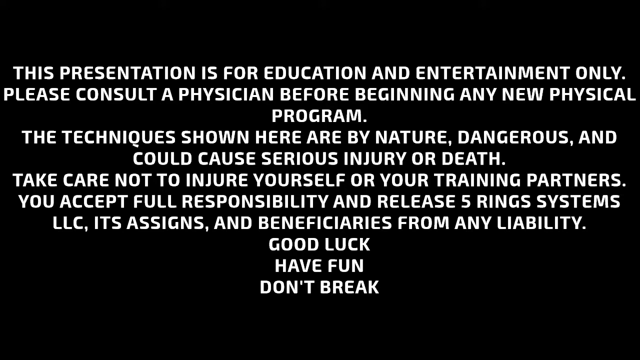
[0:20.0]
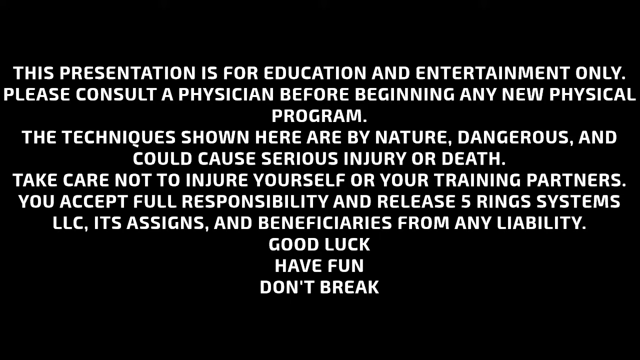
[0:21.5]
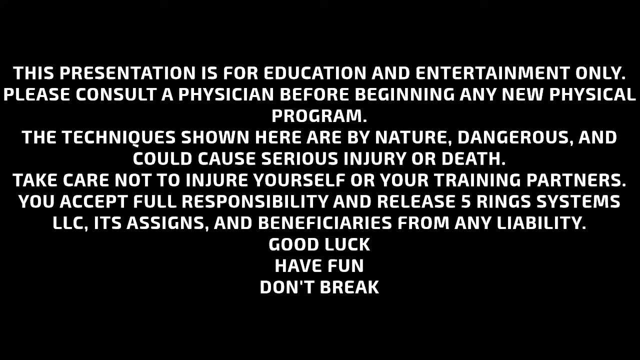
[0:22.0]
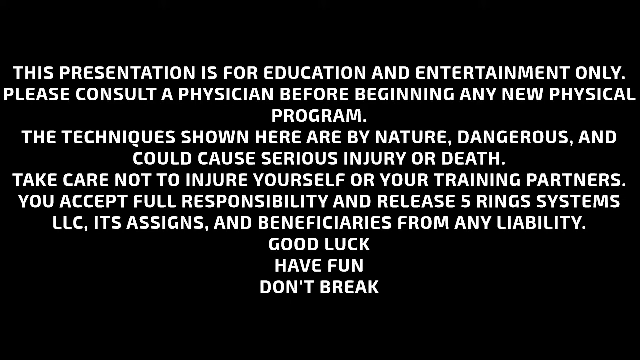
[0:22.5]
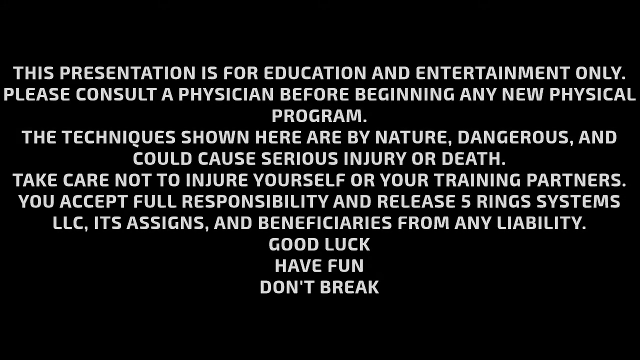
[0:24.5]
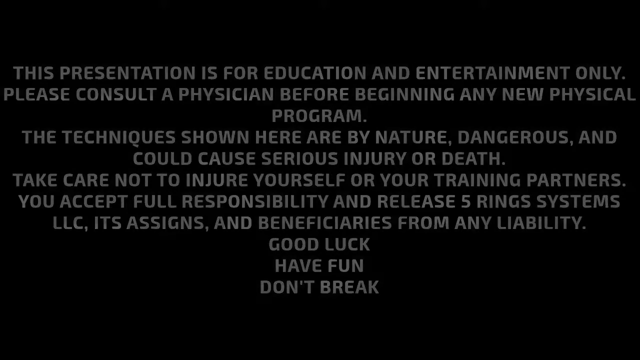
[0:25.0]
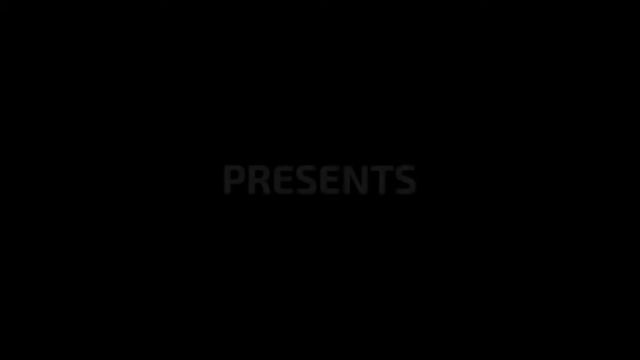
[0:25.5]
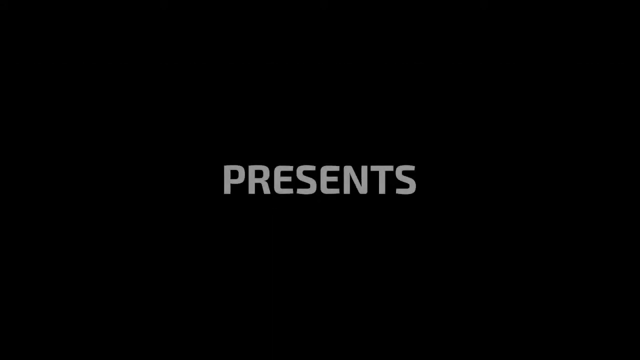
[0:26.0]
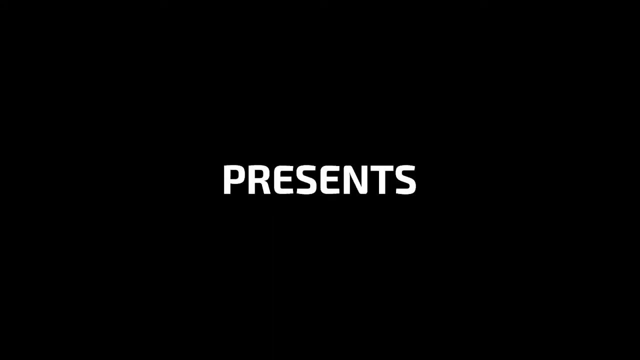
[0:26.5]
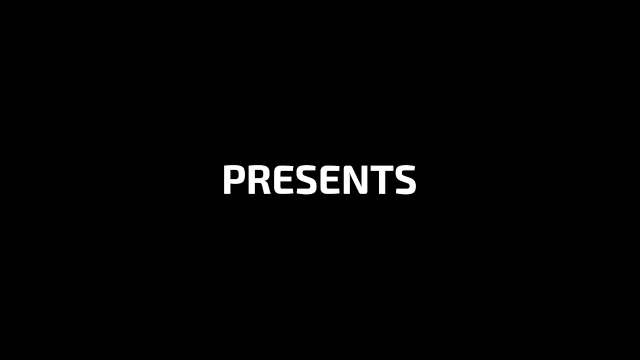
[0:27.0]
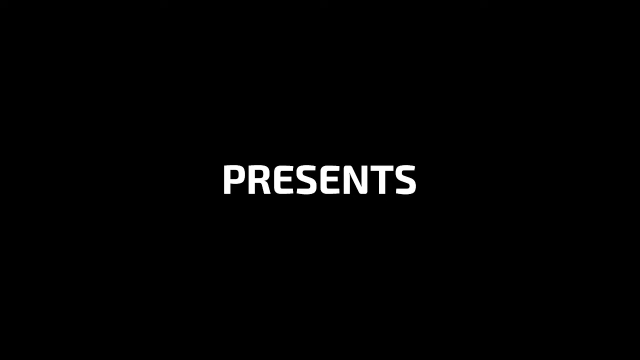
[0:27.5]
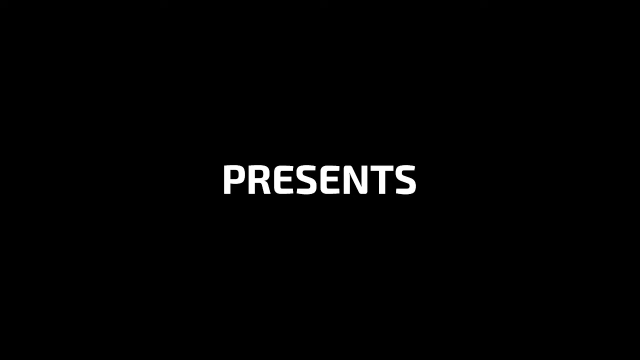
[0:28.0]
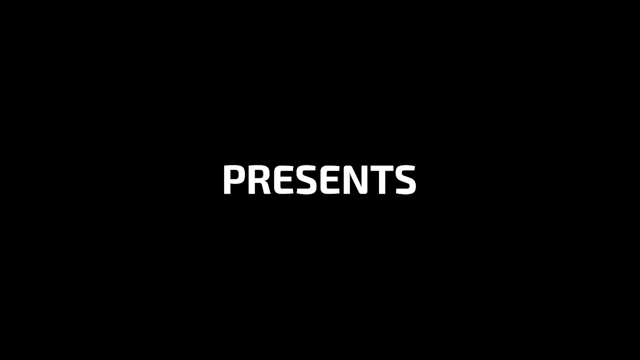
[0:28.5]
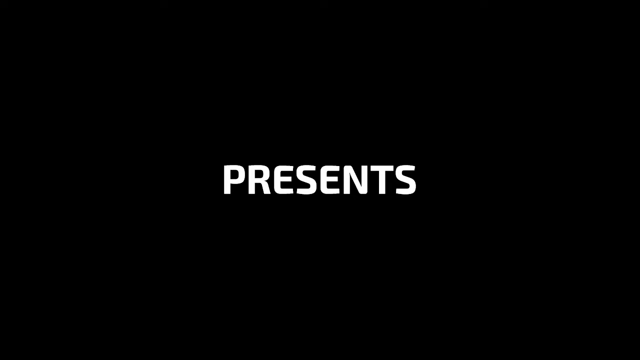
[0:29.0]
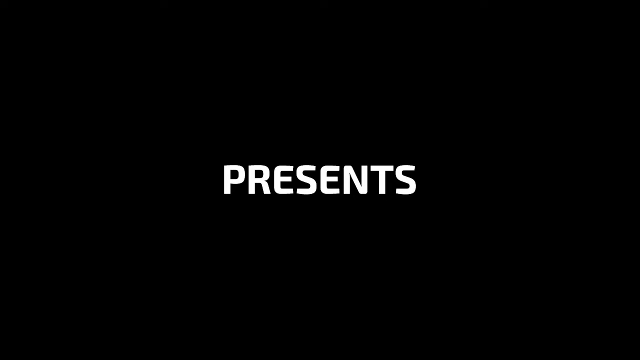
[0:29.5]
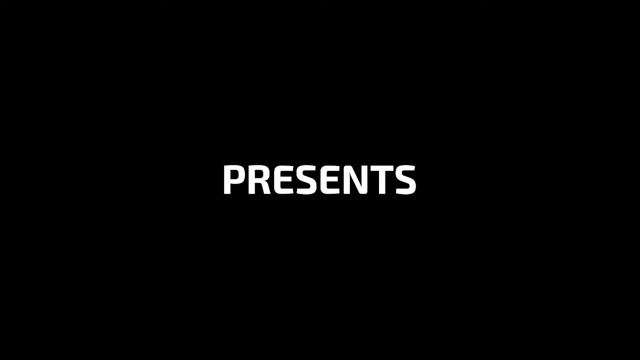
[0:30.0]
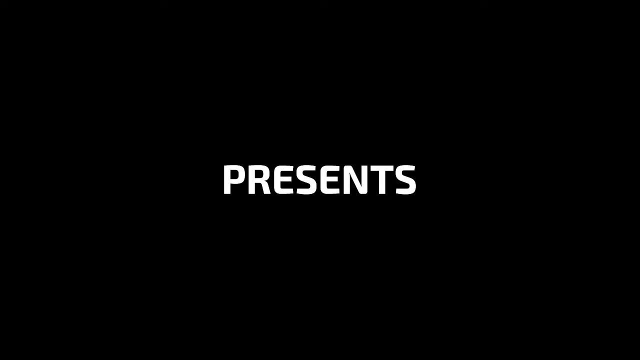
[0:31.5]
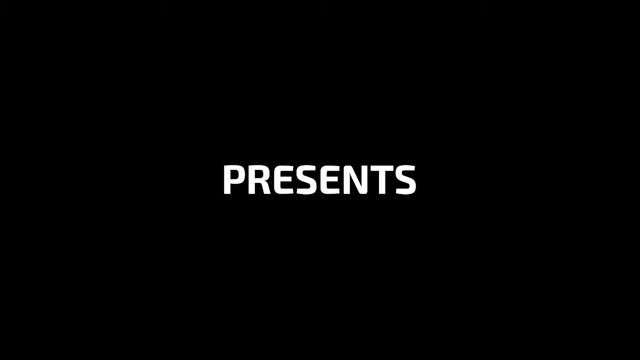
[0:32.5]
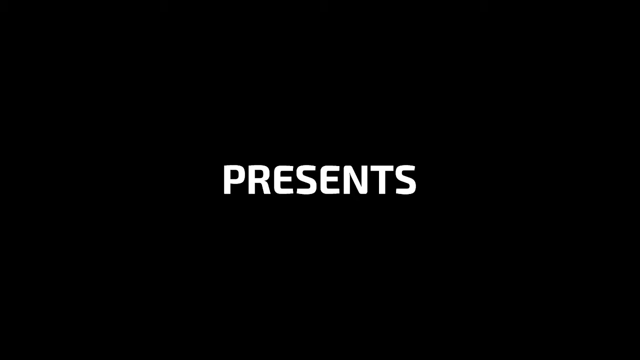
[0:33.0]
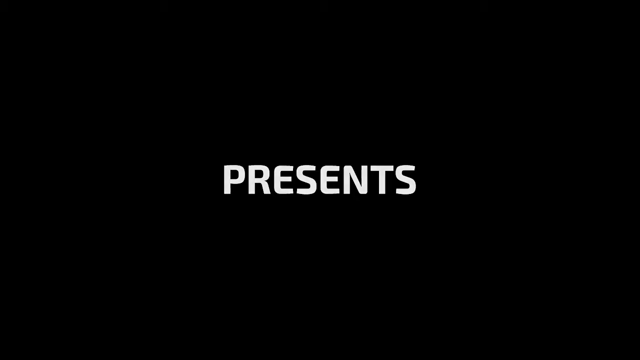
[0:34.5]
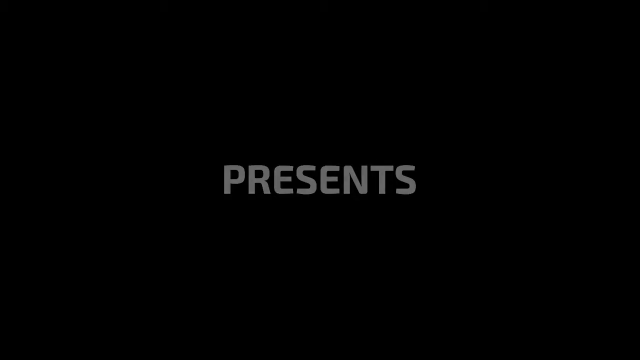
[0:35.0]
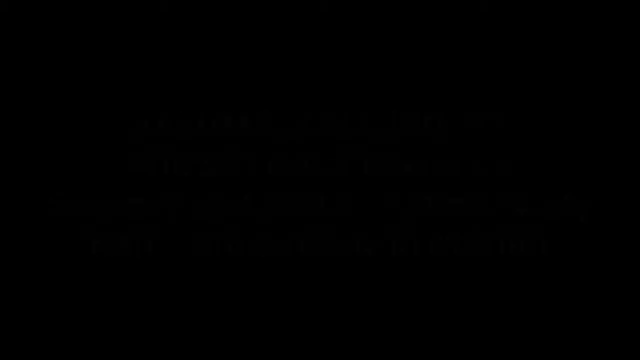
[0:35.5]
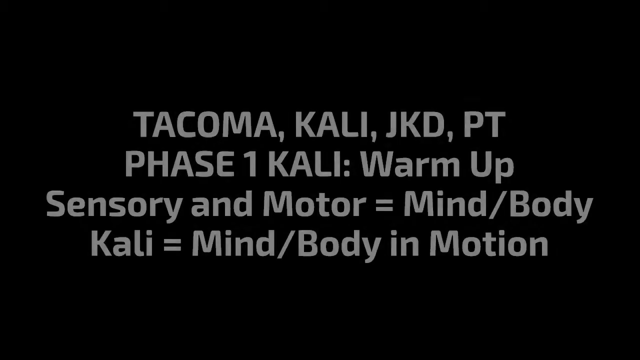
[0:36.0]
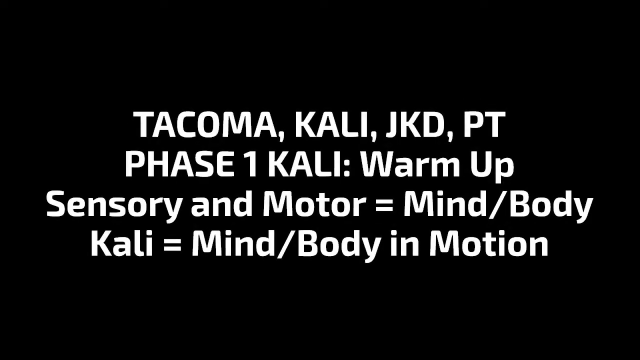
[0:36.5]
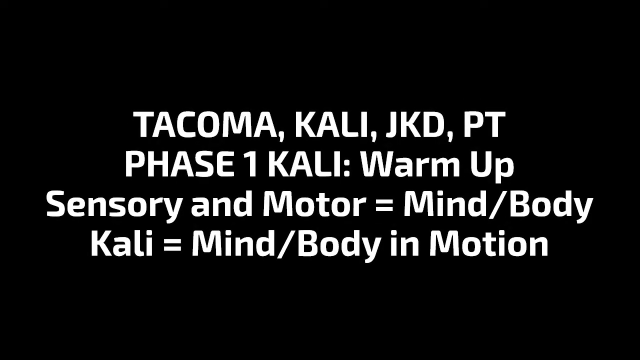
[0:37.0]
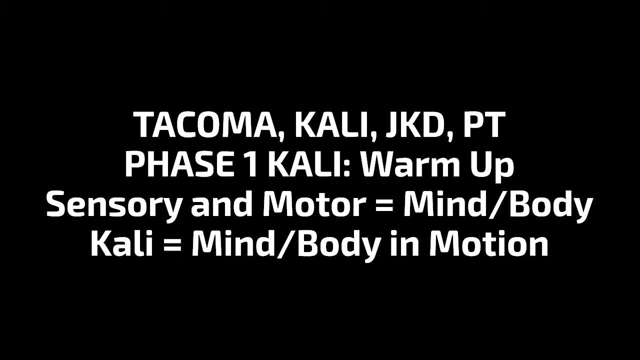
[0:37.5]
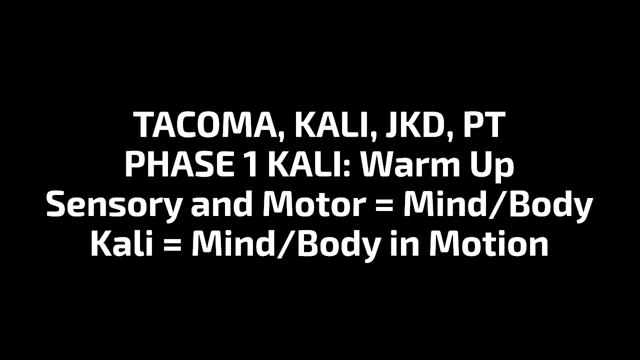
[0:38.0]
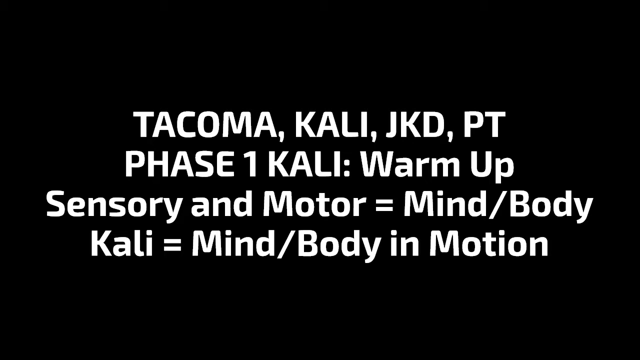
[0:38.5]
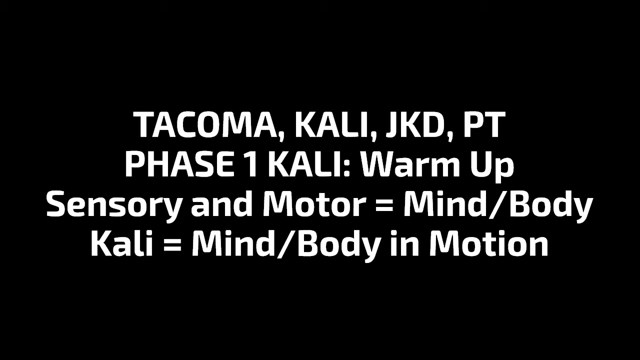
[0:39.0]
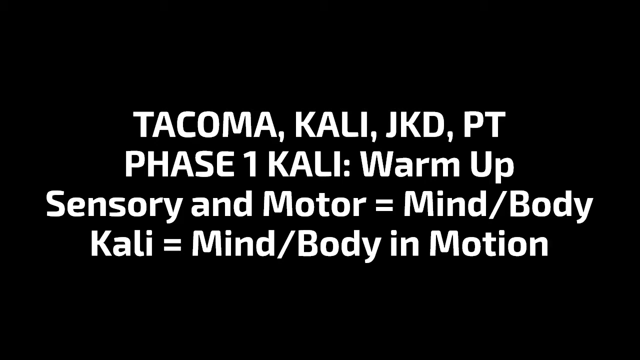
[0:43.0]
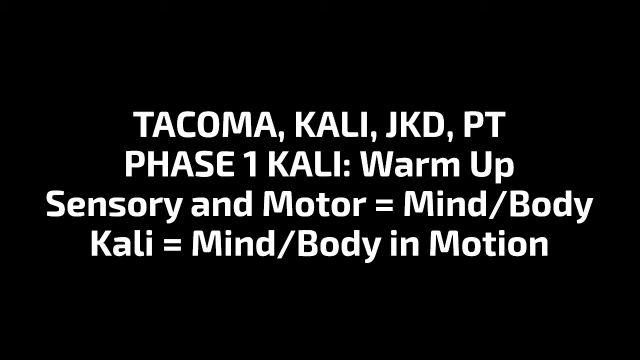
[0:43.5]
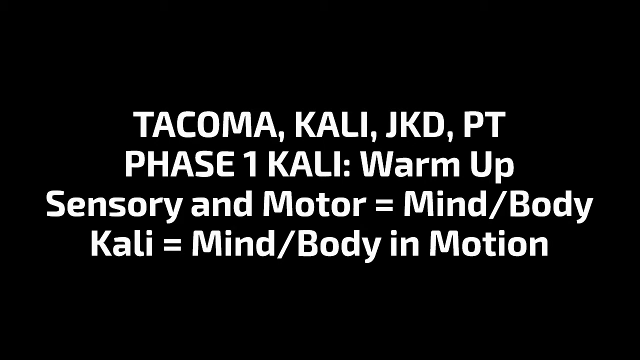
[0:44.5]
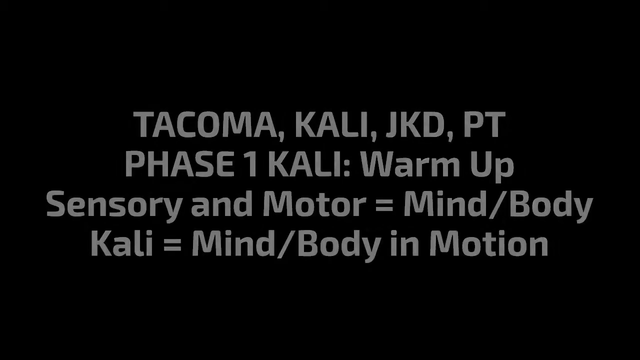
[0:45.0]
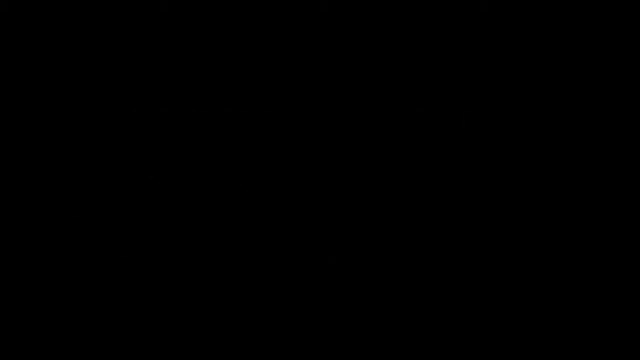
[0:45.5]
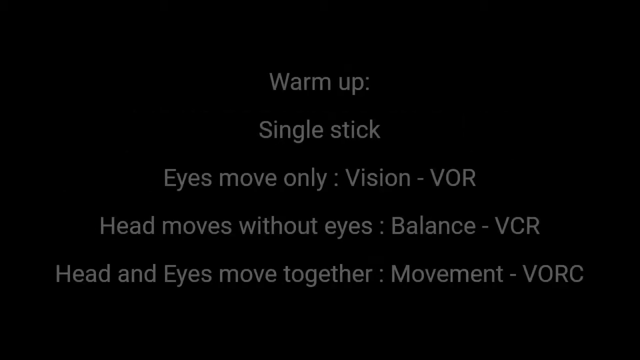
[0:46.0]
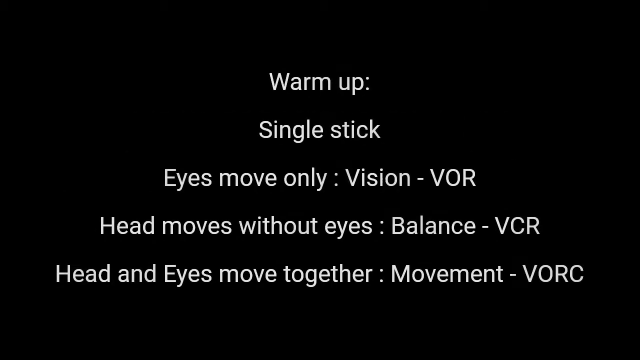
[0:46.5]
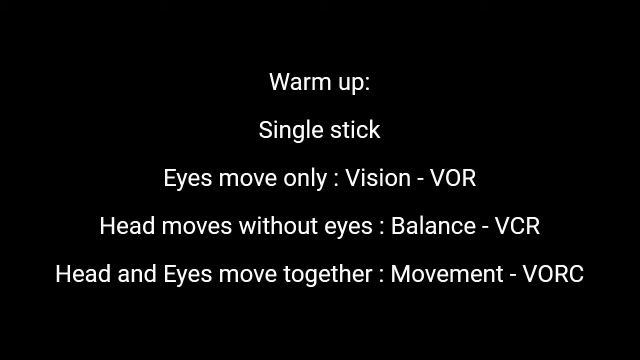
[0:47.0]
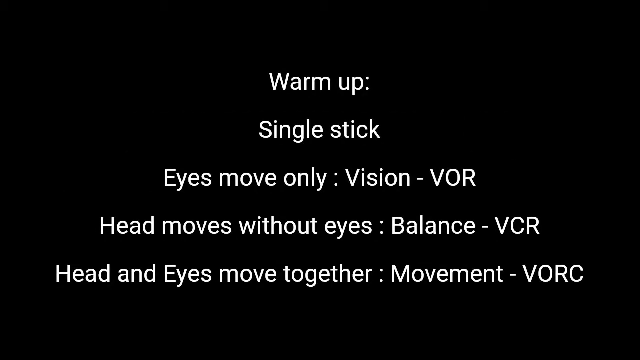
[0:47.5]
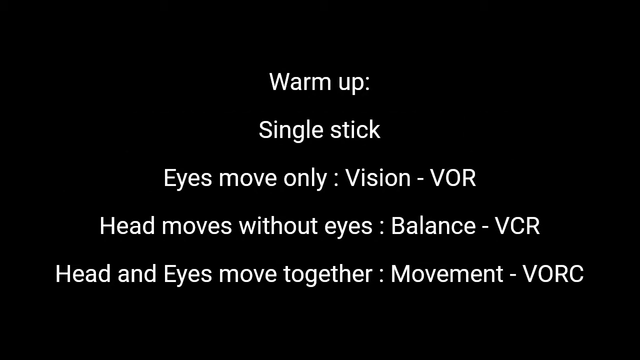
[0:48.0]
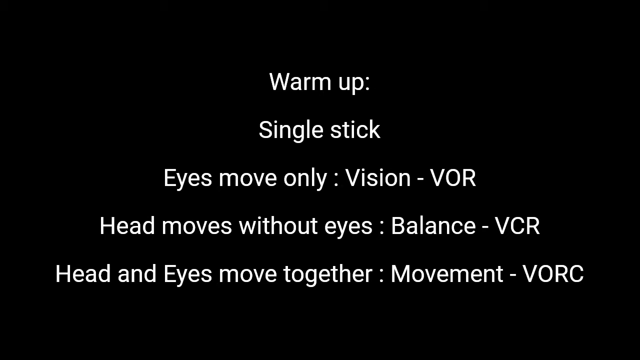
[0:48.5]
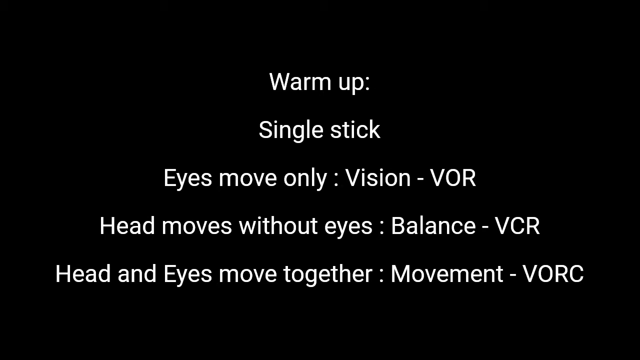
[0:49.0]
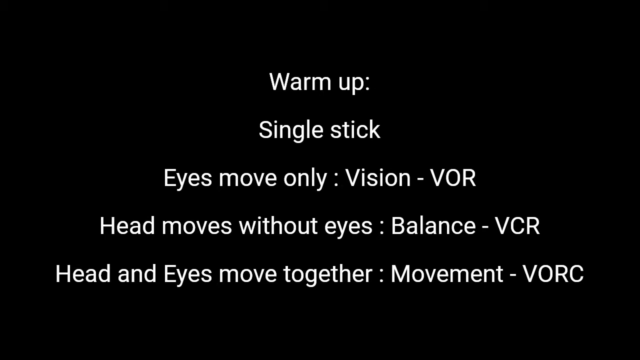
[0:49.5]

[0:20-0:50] The liability message continues in white text on a black screen: "this presentation is for education and entertainment only. Please consult a physician before beginning any new physical program. The techniques shown here are by nature dangerous and can cause serious injury or death. Take care not to injure yourself or your training partners. You accept full responsibility," ending with "Good luck. Have fun. Don't break." It stays for a while and then fades out. The screen stays black, and a single word appears in the middle and remains for several seconds before fading out. It is replaced by white text on the same black field, in all caps, including "Kali, J.K.D., P.T." and on the next line "phase one, Kali:". Then, in regular rather than all-caps text, come the lines "Warm up", "Sensory and motor = mind/body" and "Kali = mind/body motion." This is replaced by smaller white text, not in all caps, reading "warm up: single stick", "eyes move only: vision/VOR", "head moves without eyes: balance - VCR" and "head and eyes move together: movement - VORC."